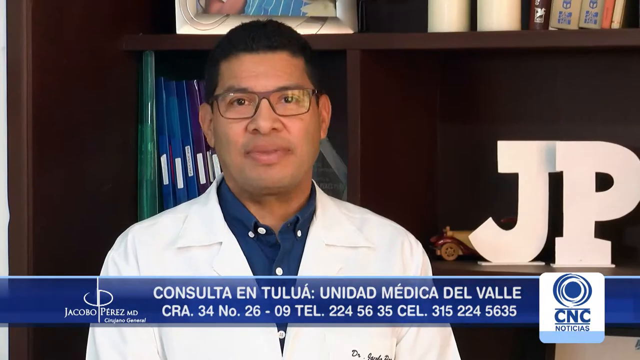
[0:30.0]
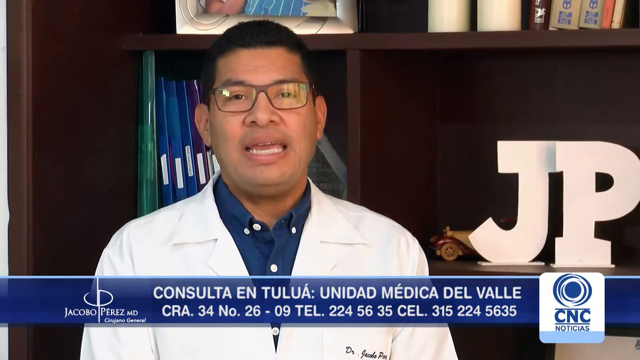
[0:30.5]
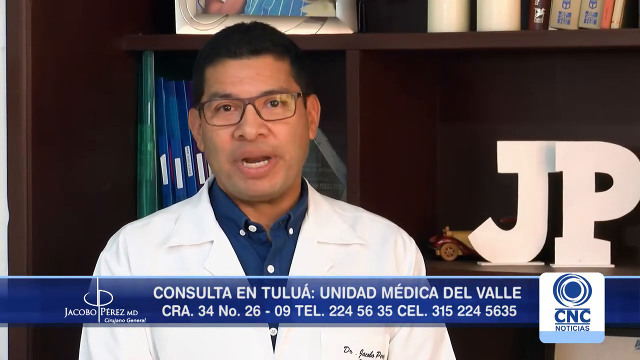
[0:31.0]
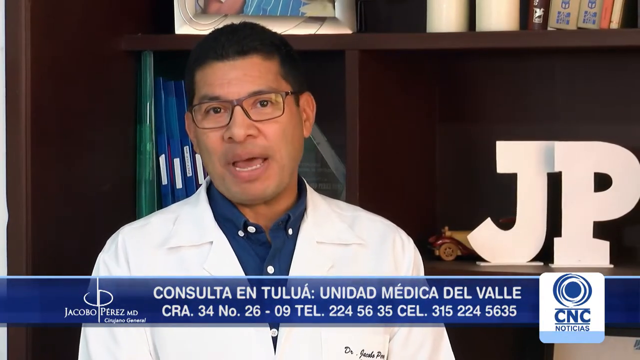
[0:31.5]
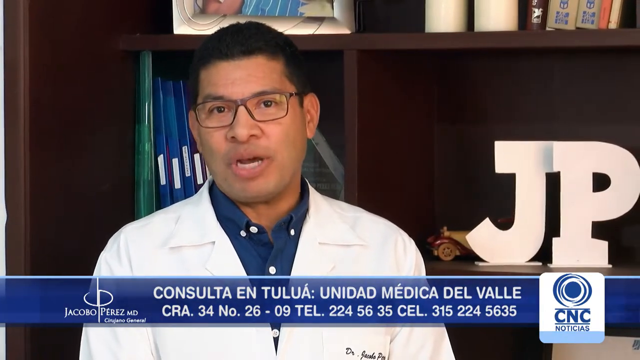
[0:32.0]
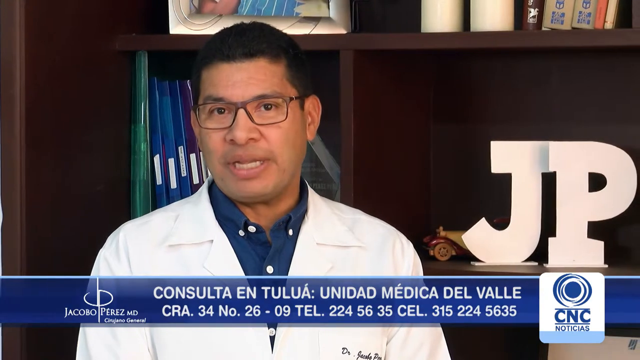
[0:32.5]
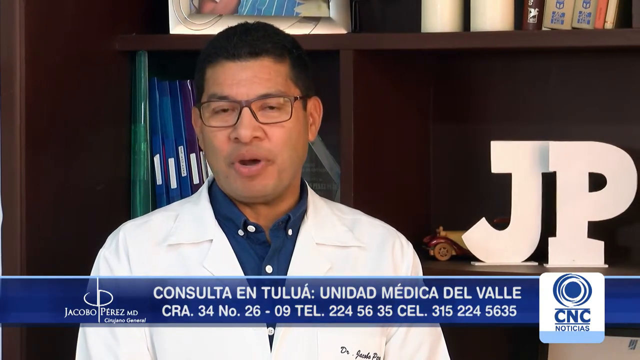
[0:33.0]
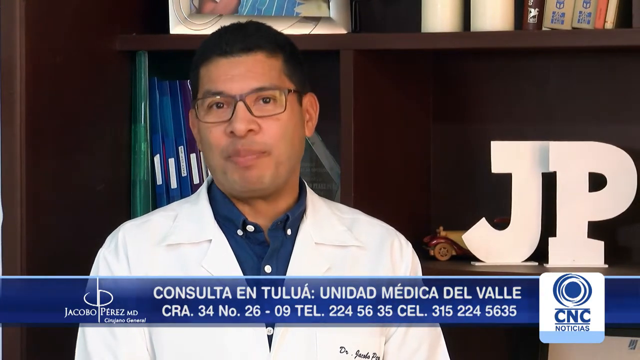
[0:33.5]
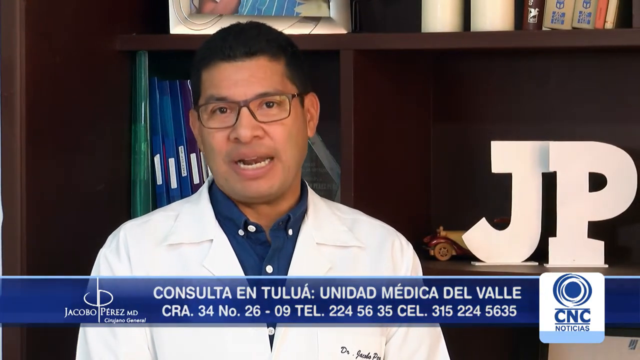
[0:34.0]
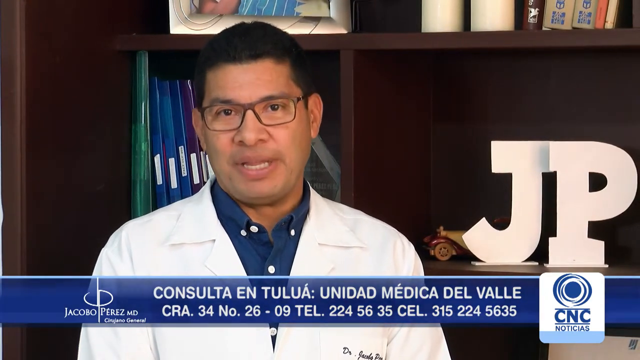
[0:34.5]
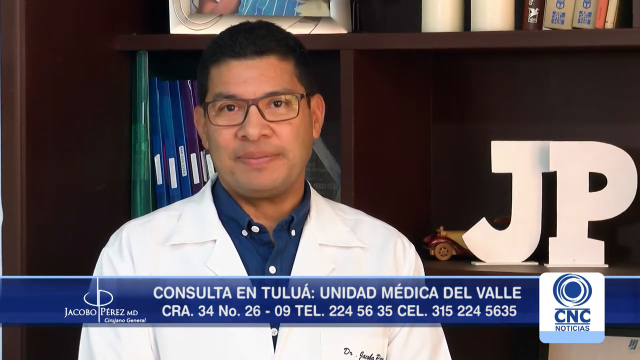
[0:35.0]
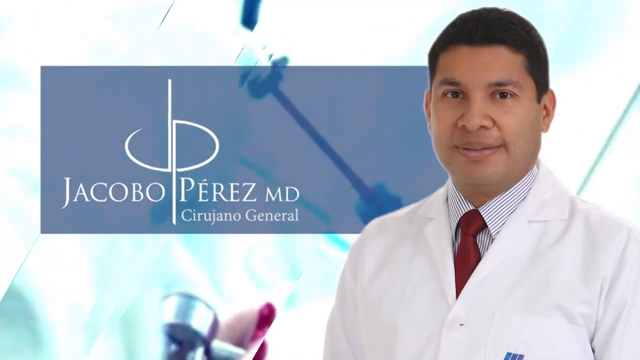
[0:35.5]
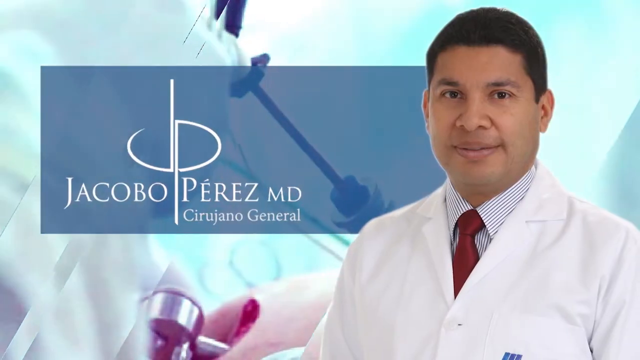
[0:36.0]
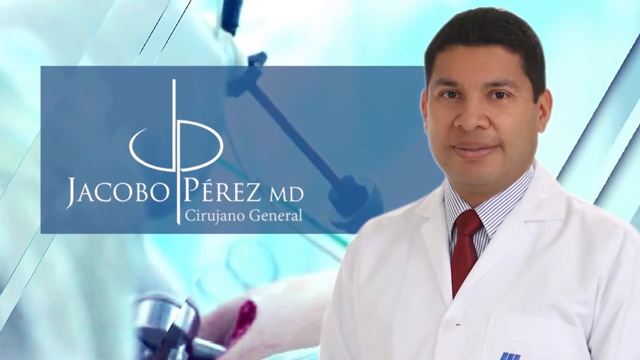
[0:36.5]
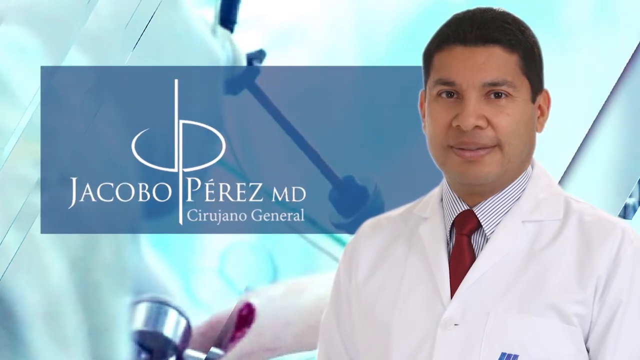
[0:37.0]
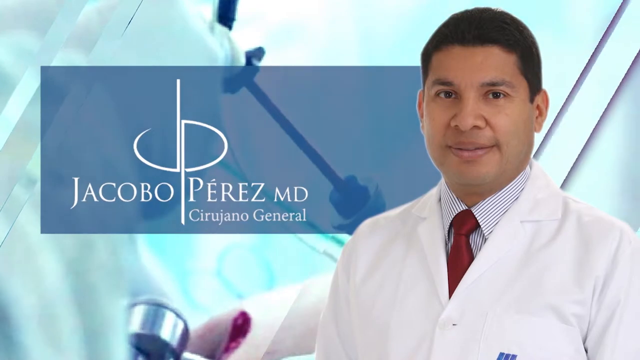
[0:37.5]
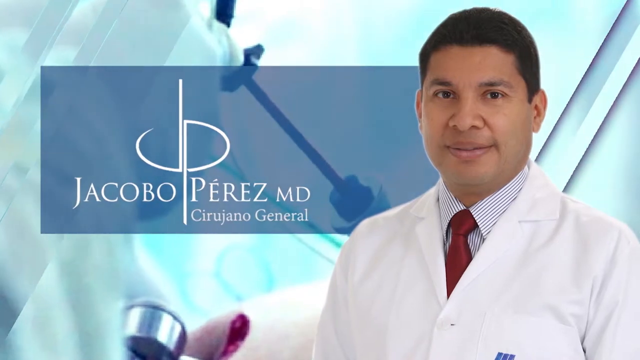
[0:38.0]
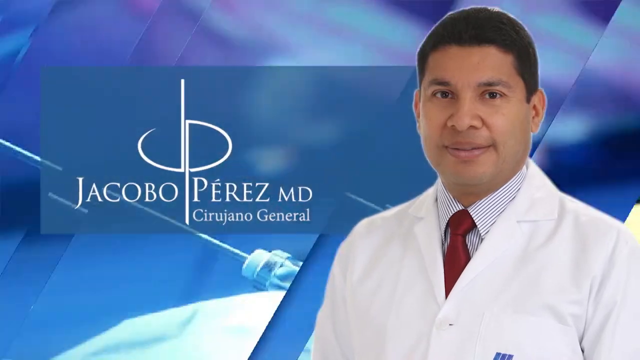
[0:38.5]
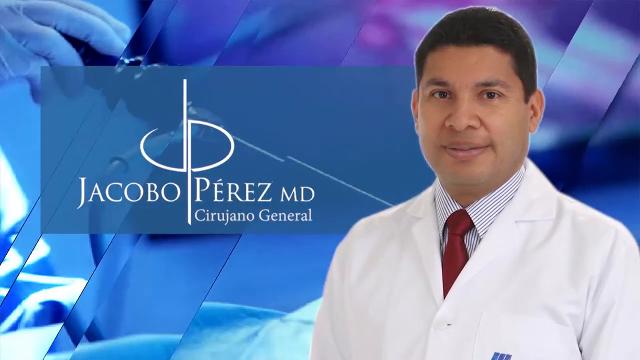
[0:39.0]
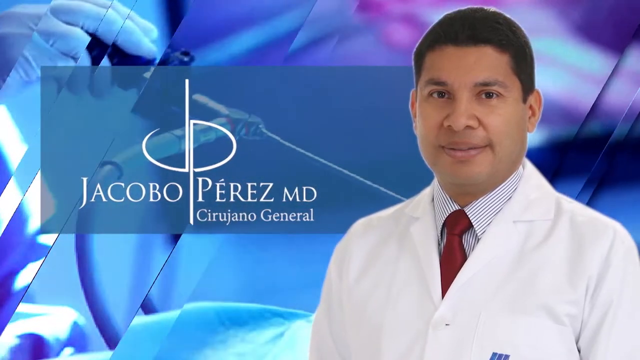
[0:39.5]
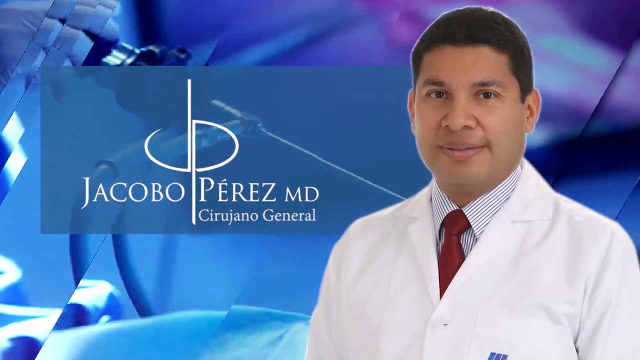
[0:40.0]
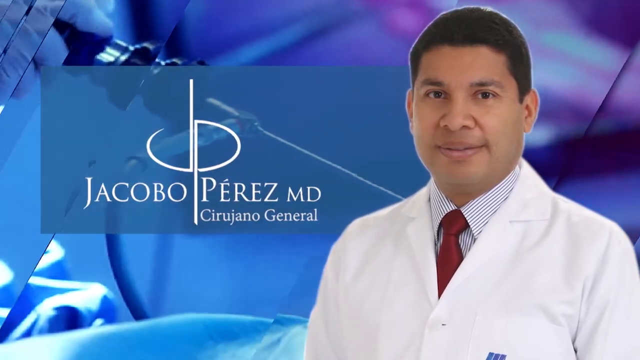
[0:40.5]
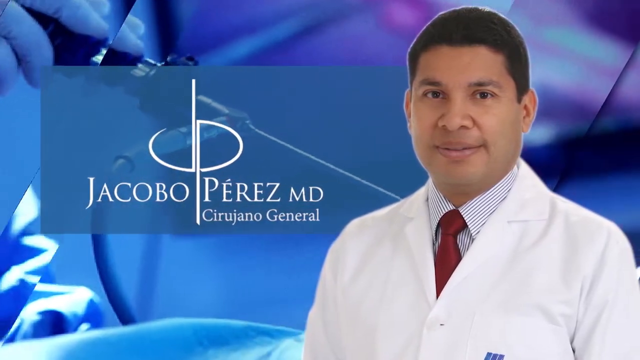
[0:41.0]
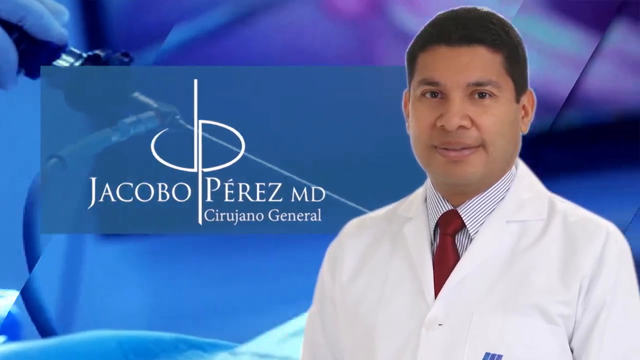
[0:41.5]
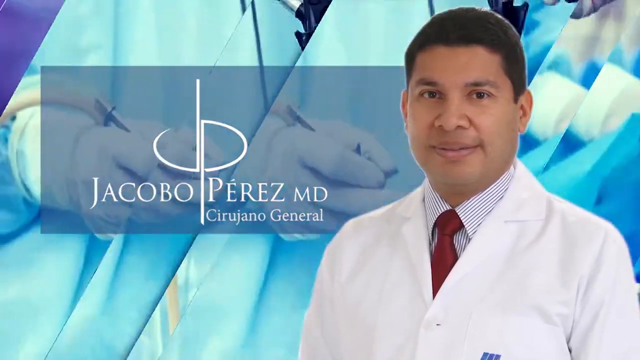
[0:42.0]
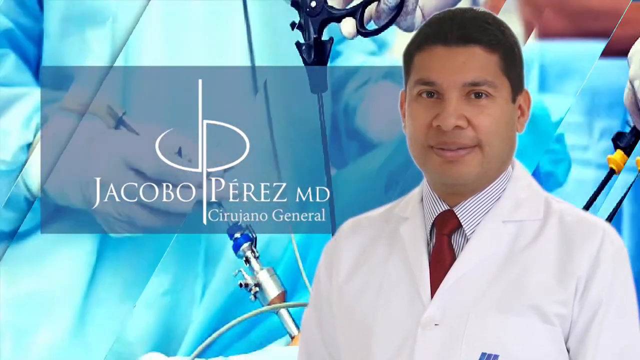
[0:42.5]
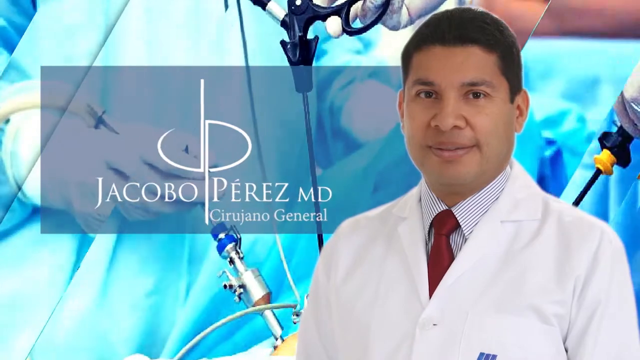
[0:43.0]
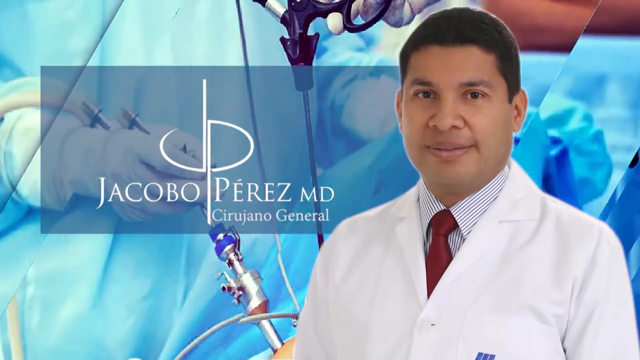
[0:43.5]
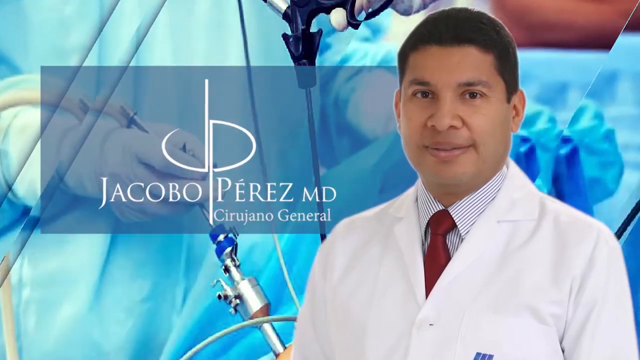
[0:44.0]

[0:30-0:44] The white, bold initials "JP", apparently the doctor's initials, are brought in very close to the camera. The doctor is still talking: his face and lips are moving, his face shifts to the side, and he turns.